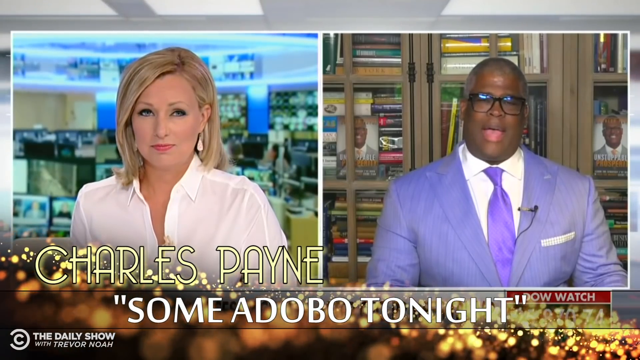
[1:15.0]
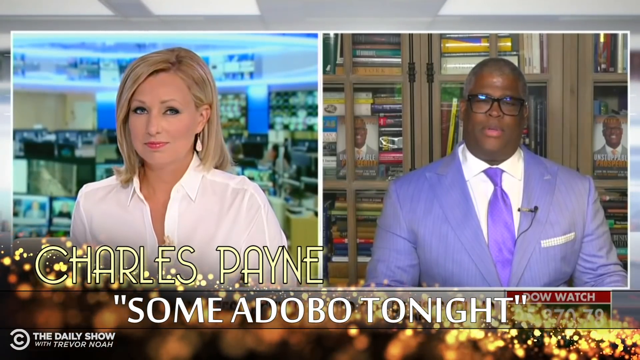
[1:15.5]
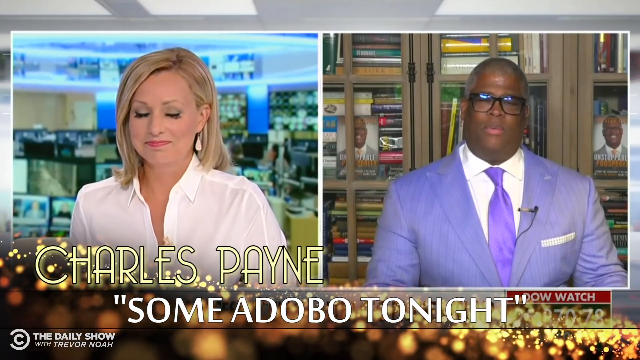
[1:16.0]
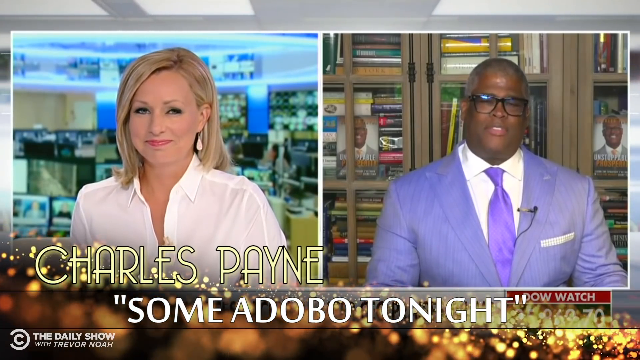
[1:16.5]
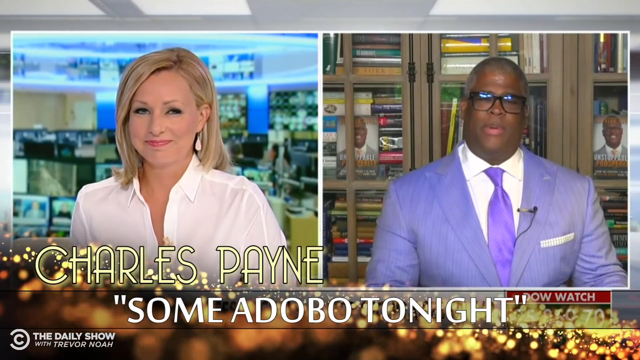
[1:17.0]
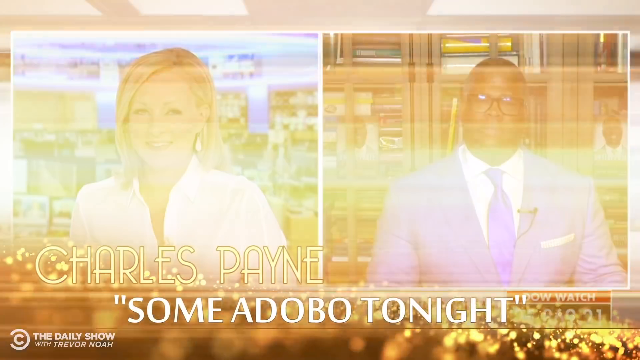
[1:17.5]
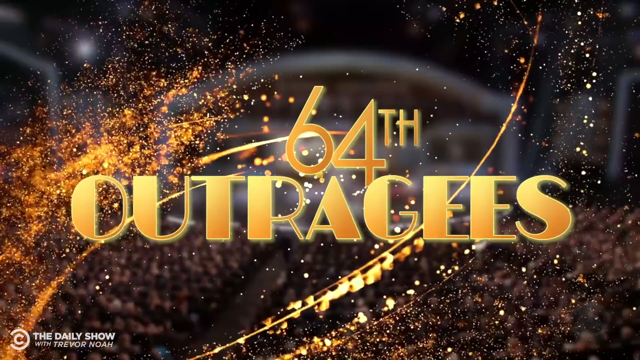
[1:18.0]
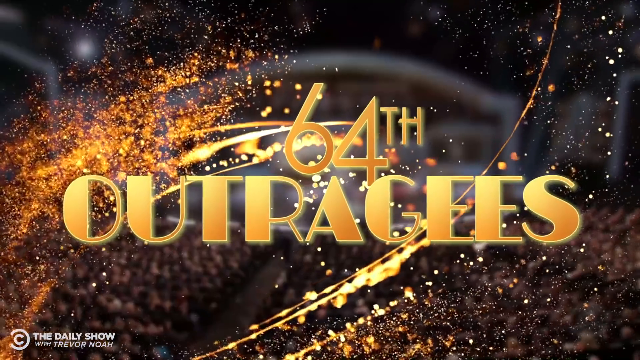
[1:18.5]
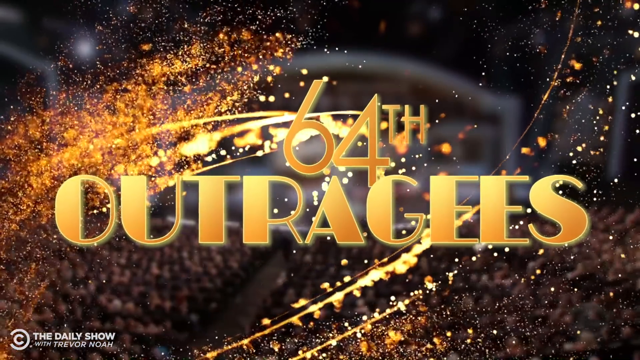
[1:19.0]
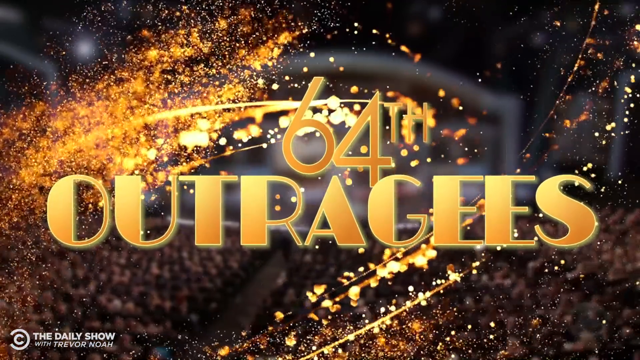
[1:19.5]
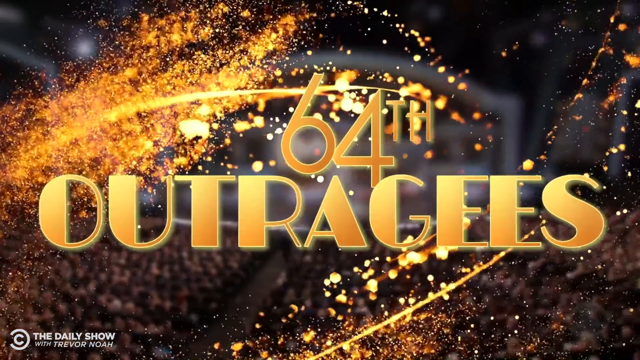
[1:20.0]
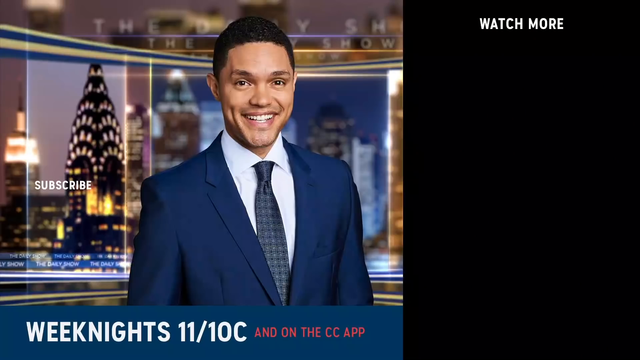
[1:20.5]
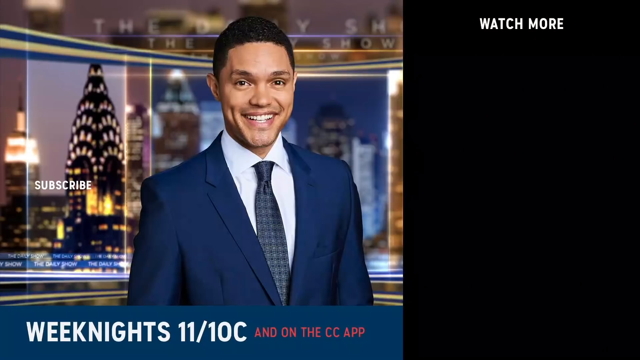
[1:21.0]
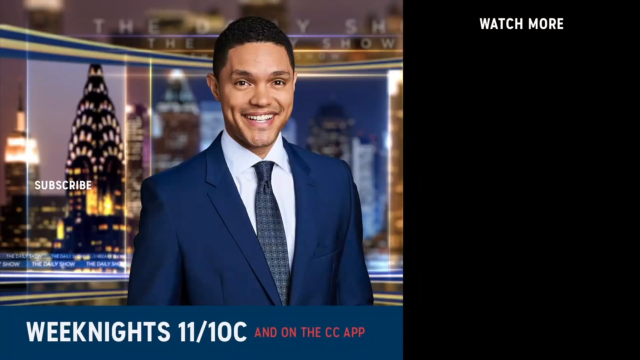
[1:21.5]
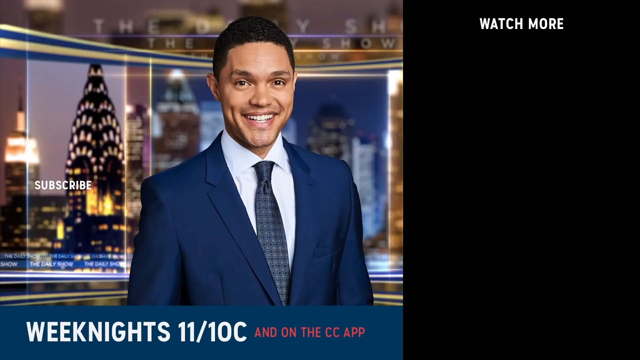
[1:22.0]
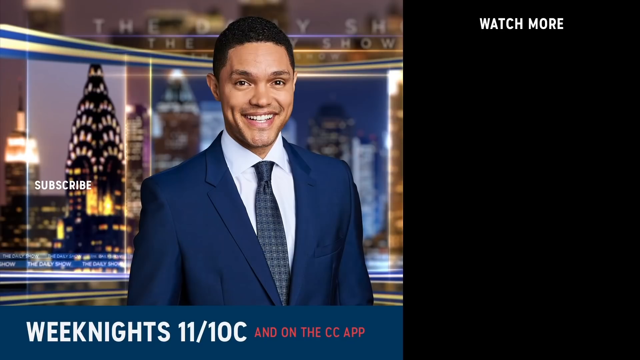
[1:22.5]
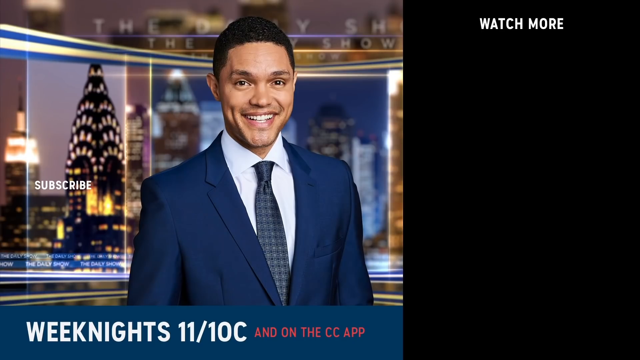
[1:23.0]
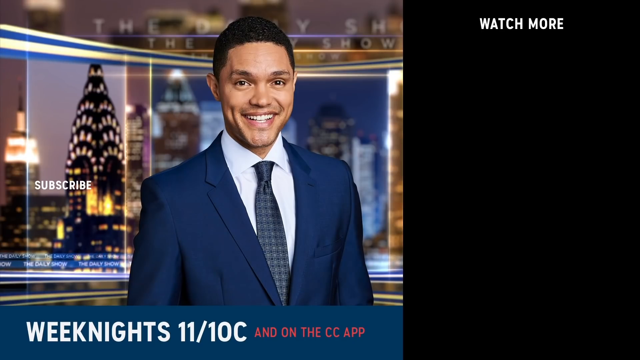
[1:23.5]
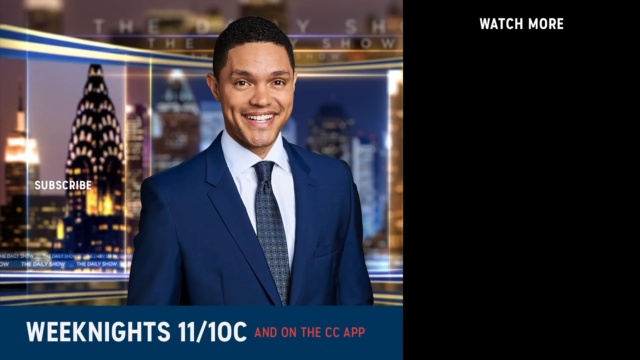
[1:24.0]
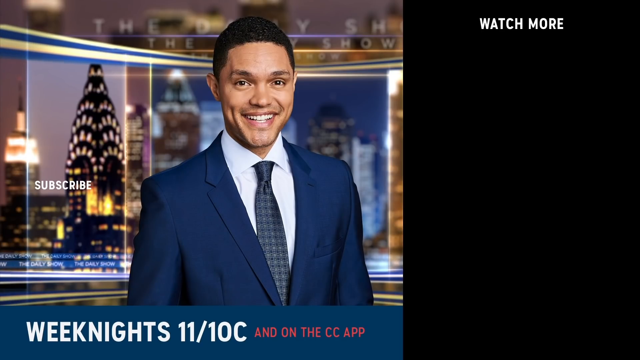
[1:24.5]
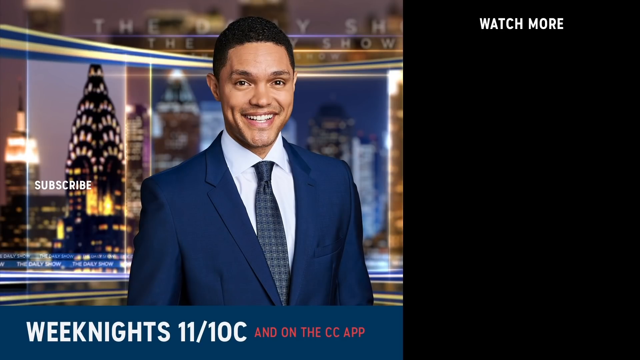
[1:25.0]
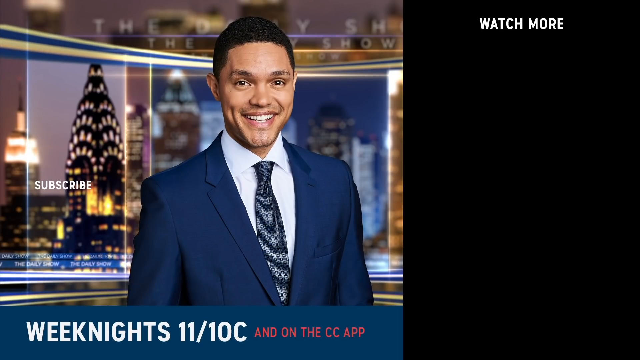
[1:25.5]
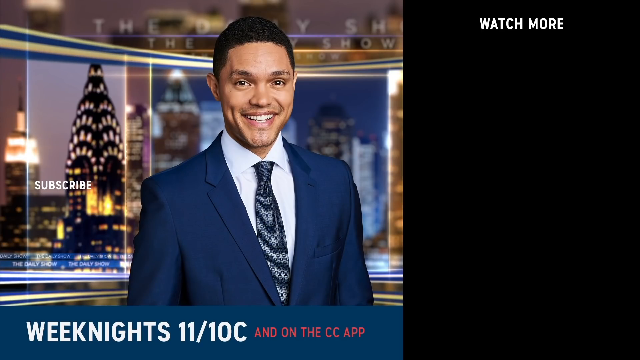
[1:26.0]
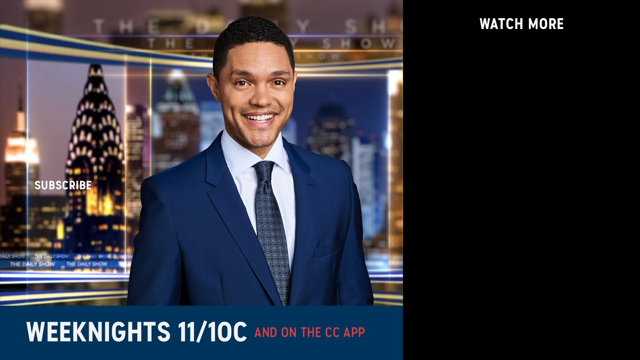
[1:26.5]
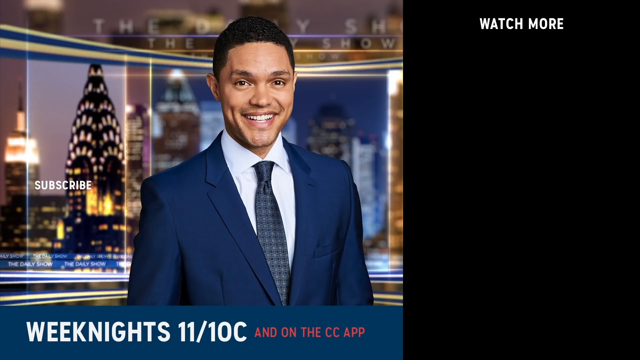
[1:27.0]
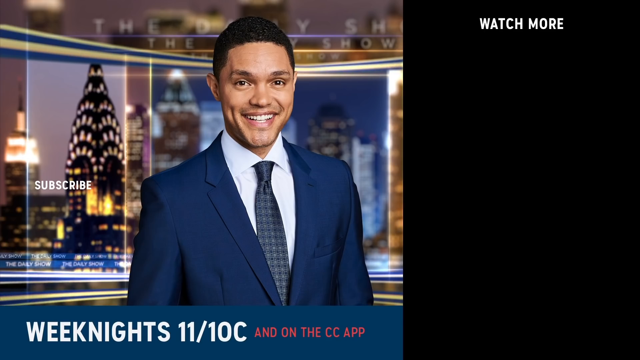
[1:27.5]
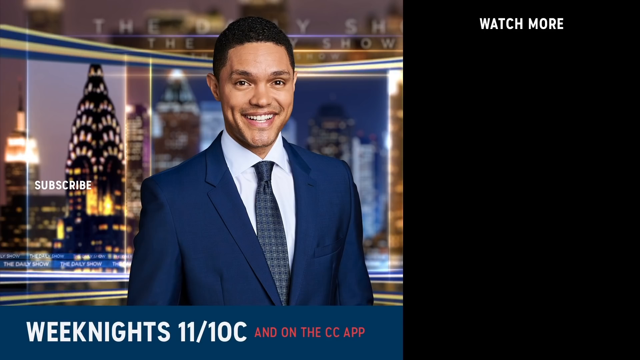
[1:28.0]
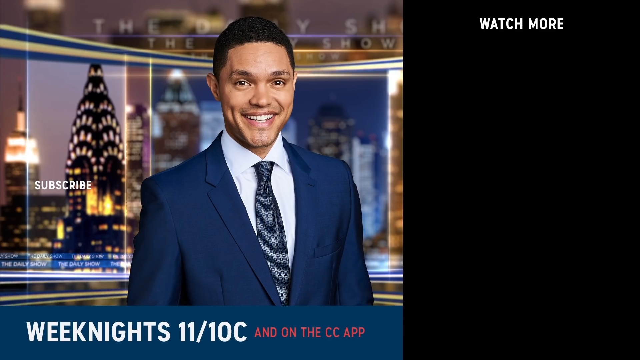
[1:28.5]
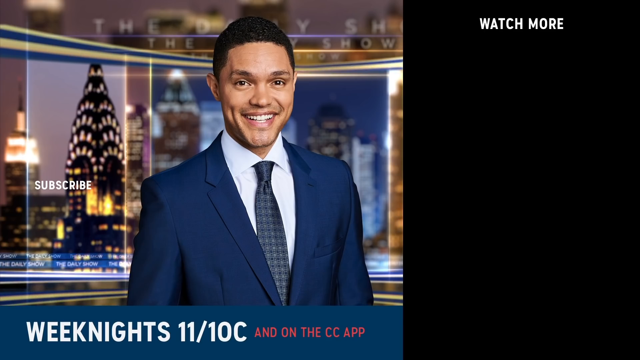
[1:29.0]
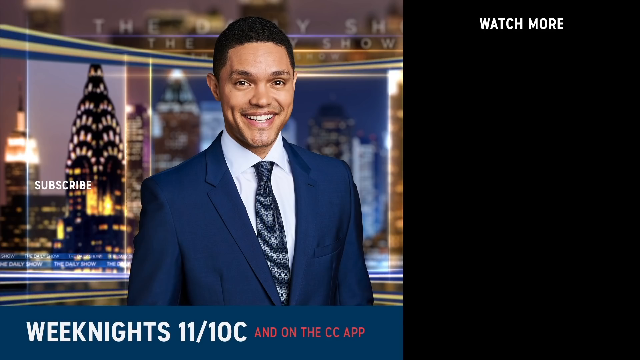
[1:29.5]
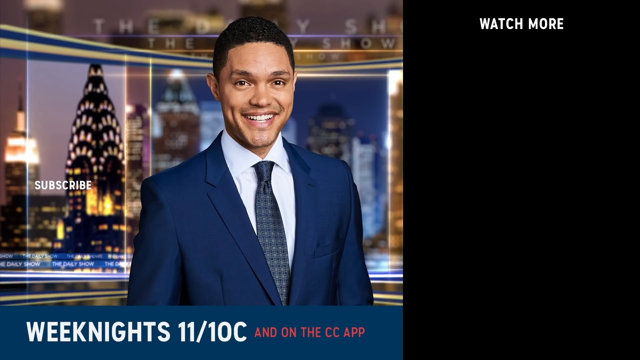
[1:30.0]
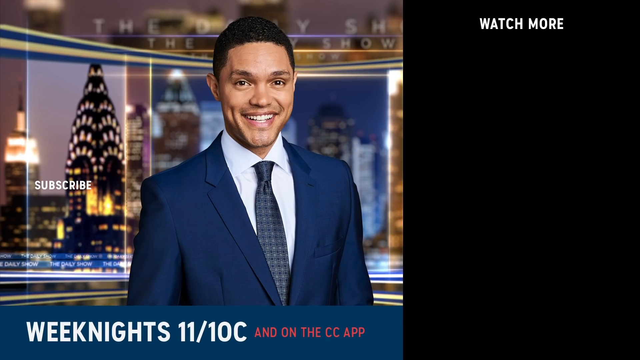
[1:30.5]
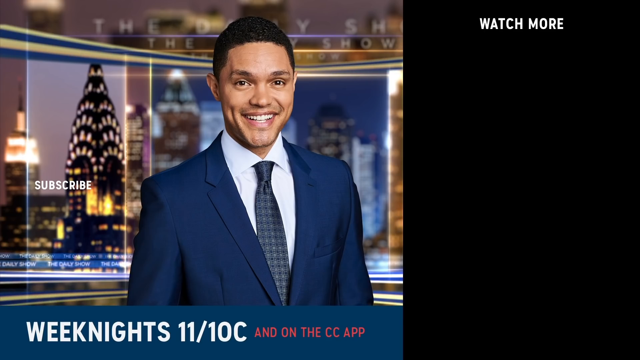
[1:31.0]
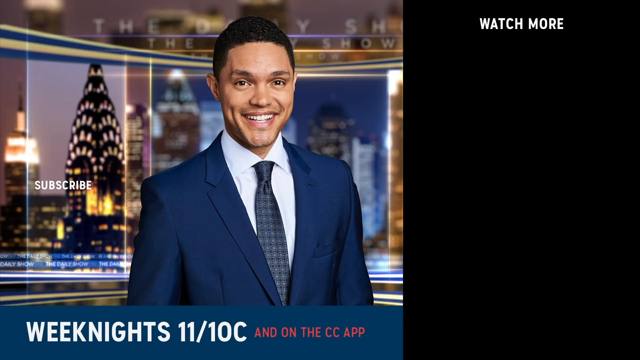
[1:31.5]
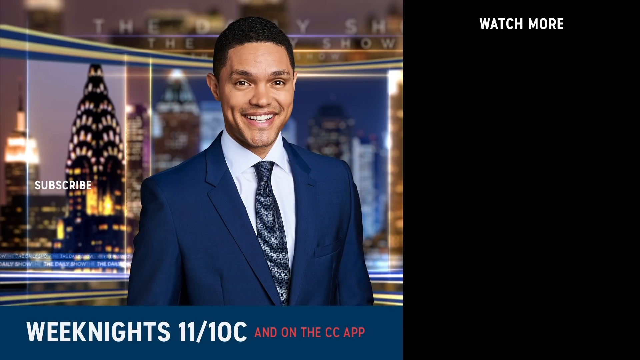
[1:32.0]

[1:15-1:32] The nominee Charles Payne appears in The Daily Show's fake award segment, the 64th Annual Outragees, with the text "some adobo tonight" below him. He is in a Fox News interview with a blonde female interviewer, on the right side, speaking briefly. It then cuts away to another graphic for the 64th Outragees, styled like a fake award graphic. The ending is a typical YouTube end screen with an image of host Trevor Noah and prompts to watch full episodes, subscribe to the Daily Show, and watch other videos.